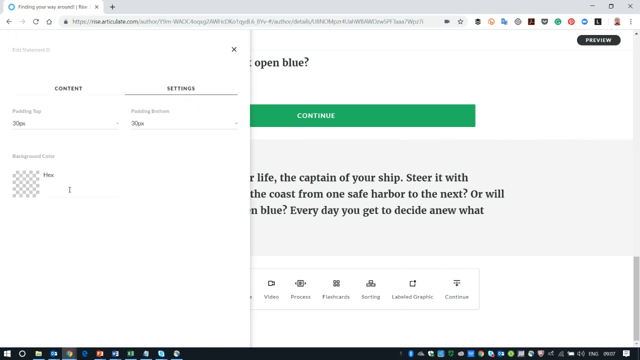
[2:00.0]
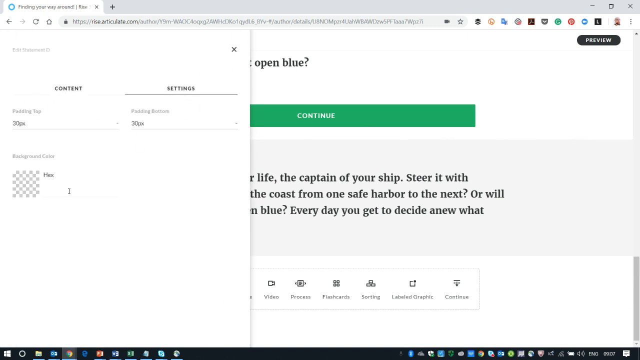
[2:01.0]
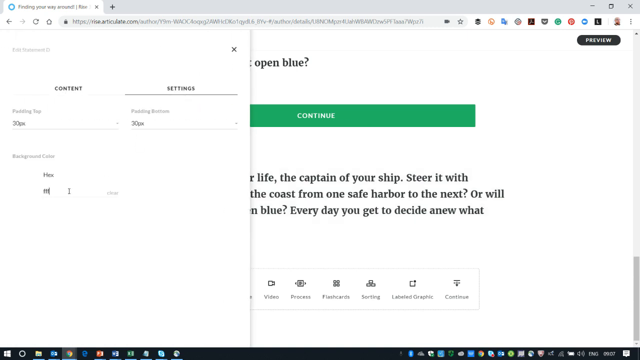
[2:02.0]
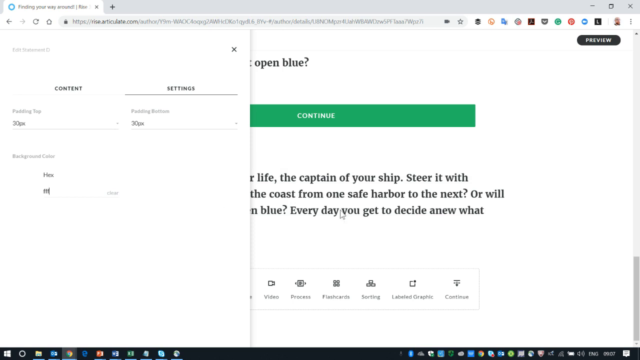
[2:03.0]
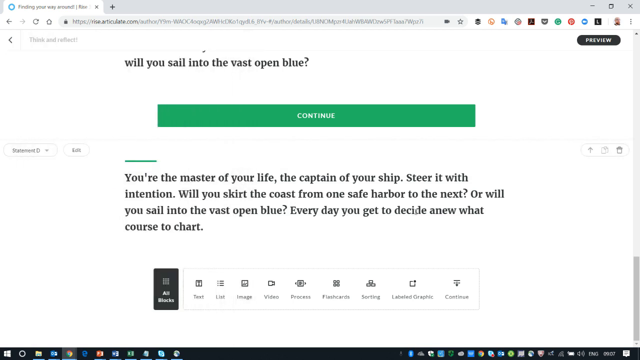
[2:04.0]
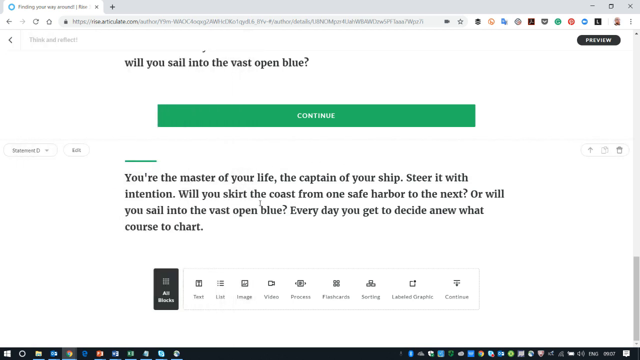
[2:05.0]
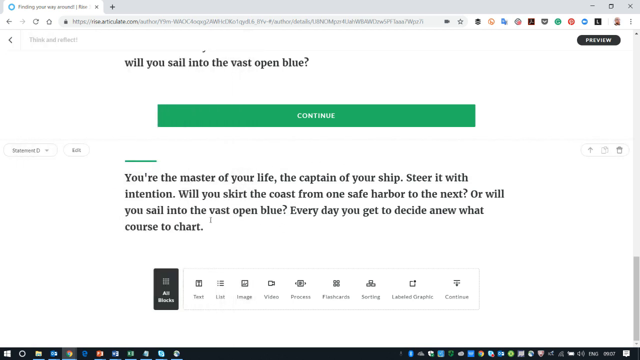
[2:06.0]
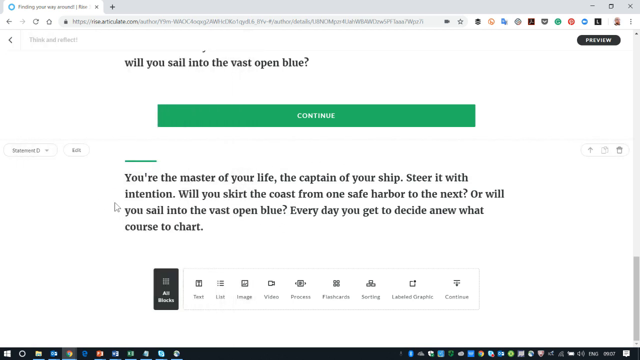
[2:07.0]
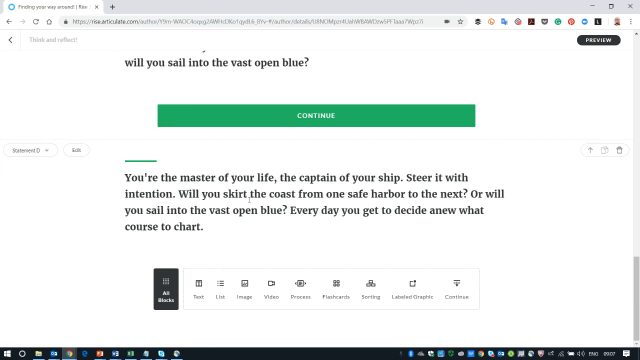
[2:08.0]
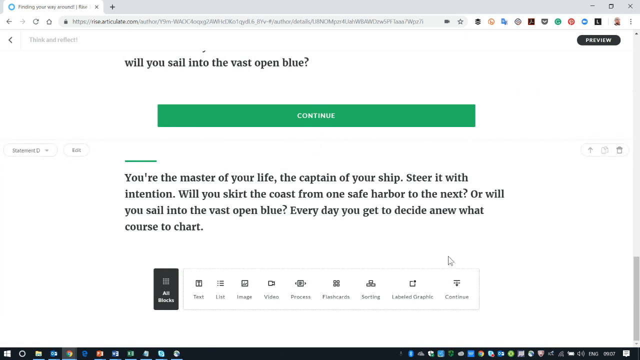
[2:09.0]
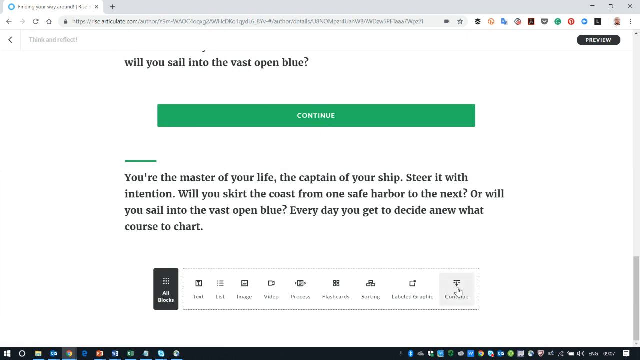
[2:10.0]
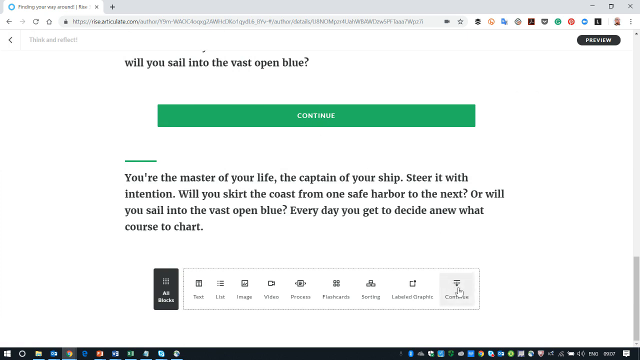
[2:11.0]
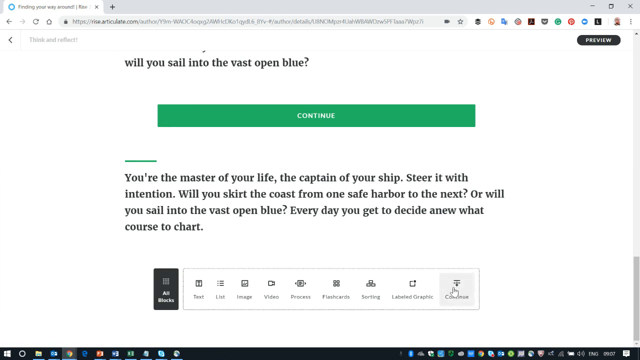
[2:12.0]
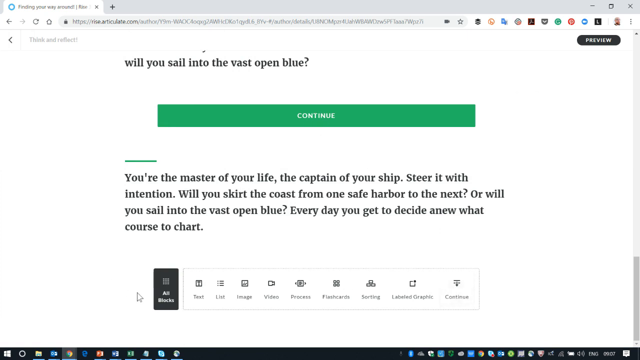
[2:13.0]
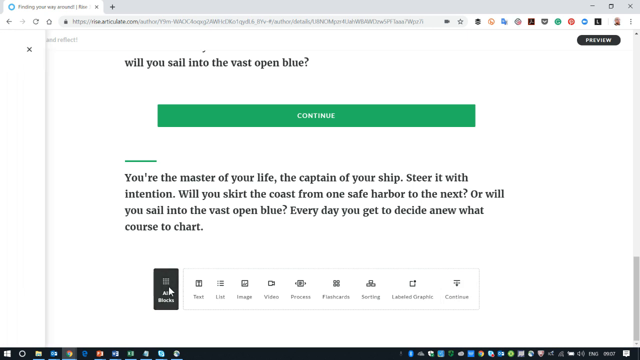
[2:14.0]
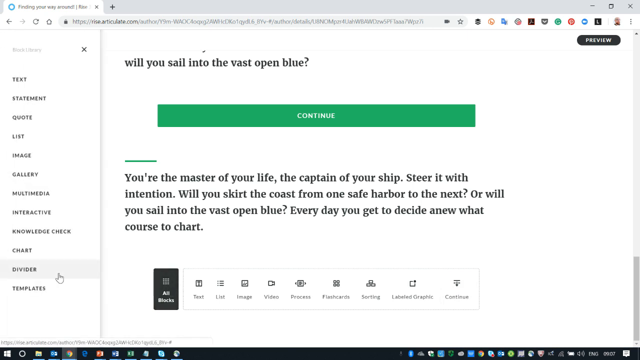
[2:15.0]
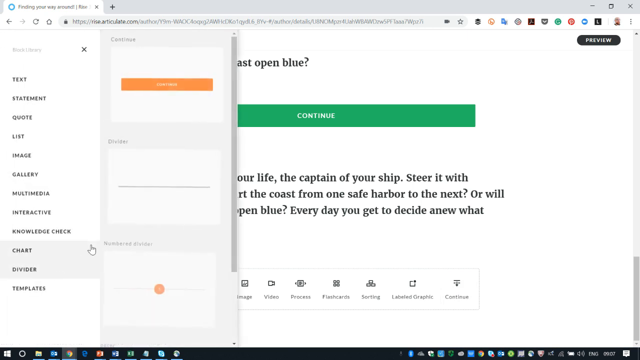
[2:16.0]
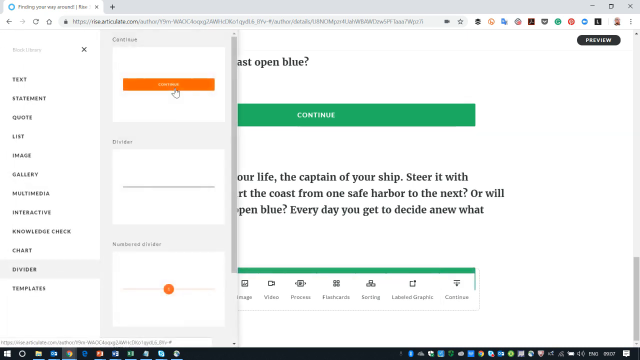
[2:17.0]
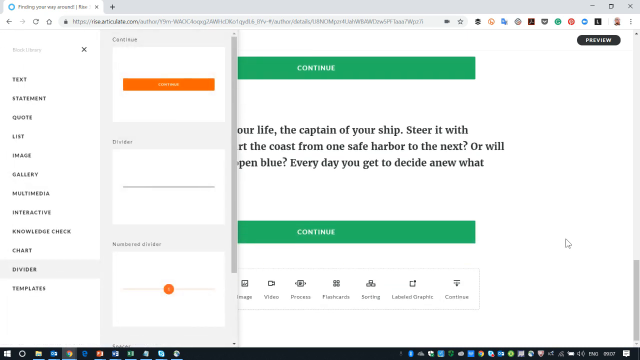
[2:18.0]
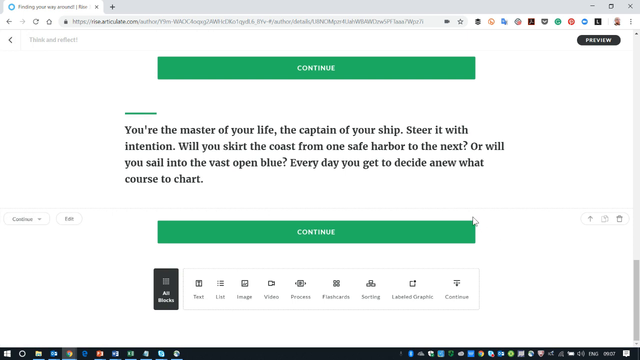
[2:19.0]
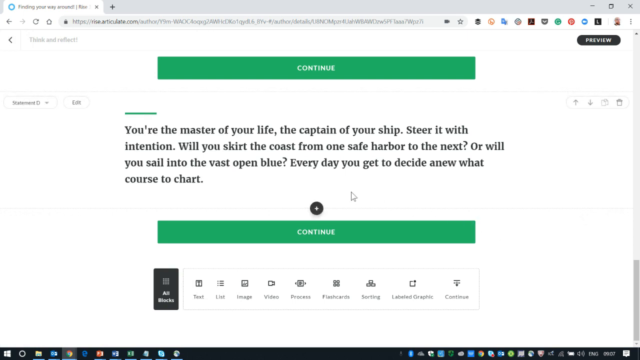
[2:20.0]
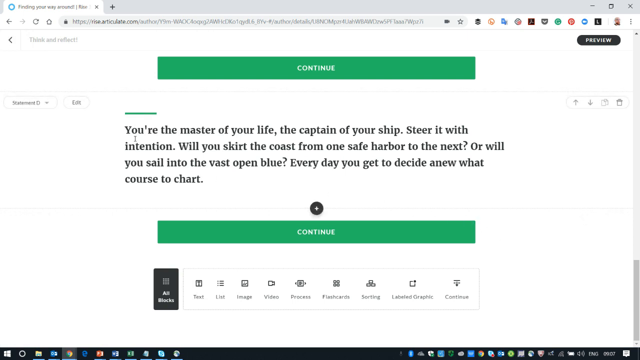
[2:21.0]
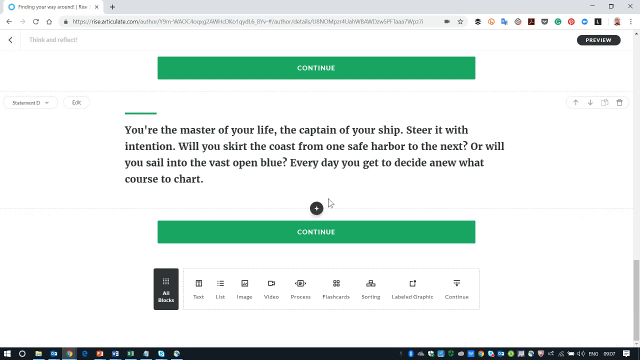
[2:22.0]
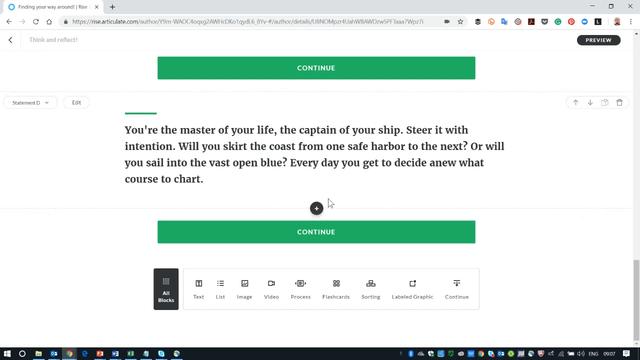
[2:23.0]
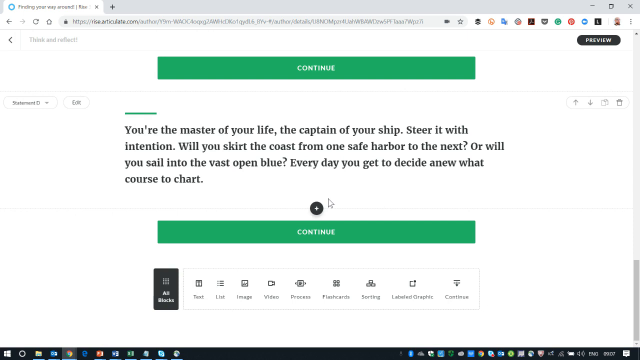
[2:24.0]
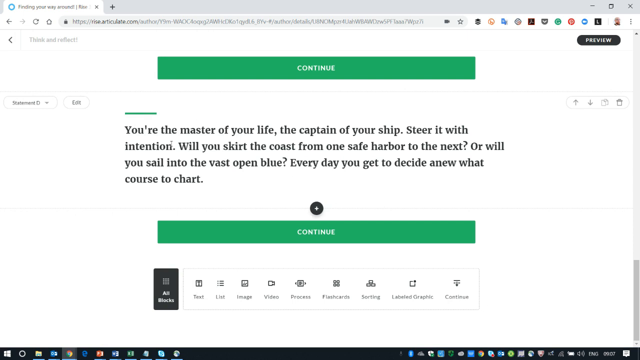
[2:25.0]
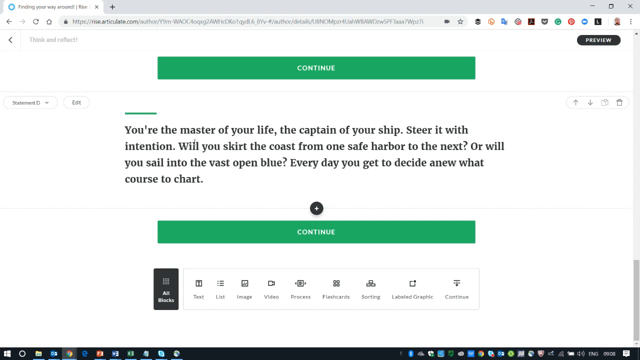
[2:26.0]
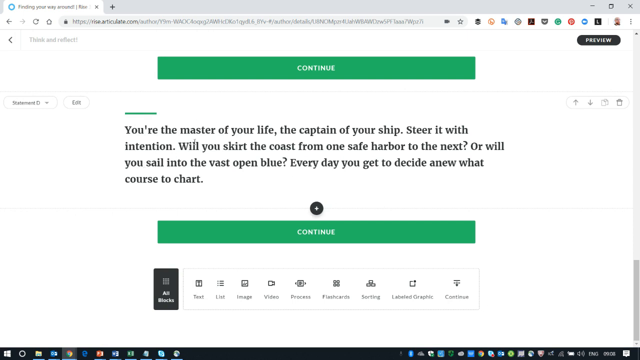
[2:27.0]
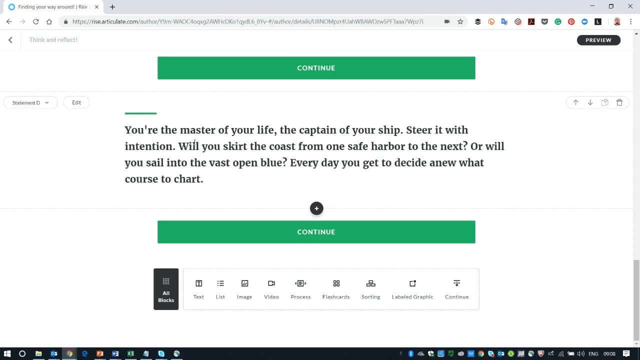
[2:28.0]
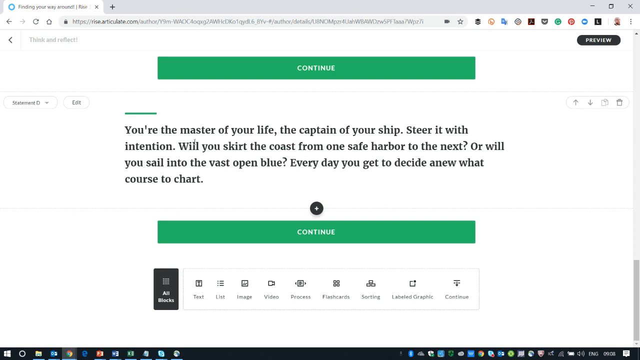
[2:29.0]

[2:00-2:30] The question is still on screen: "You're the master of your life, the captain of your ship. Steer it with intentions. Will you skirt the course from one safe harbor to the next", followed by "Every day you get to decide anew what course to chart." The question has been answered. The questions have been turned into video form in the preview. The preview page has contact and settings options, along with many other features, some of which are not clearly visible.